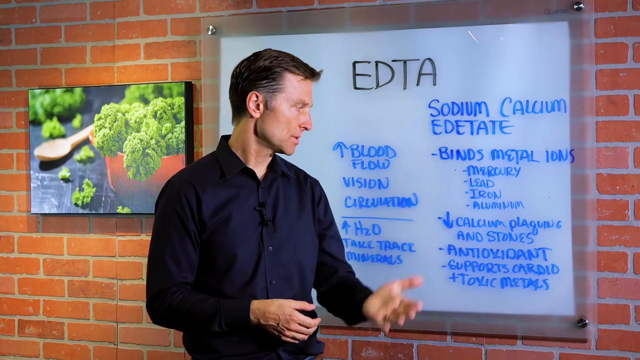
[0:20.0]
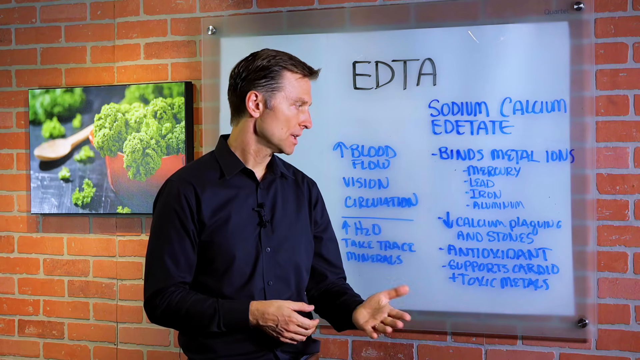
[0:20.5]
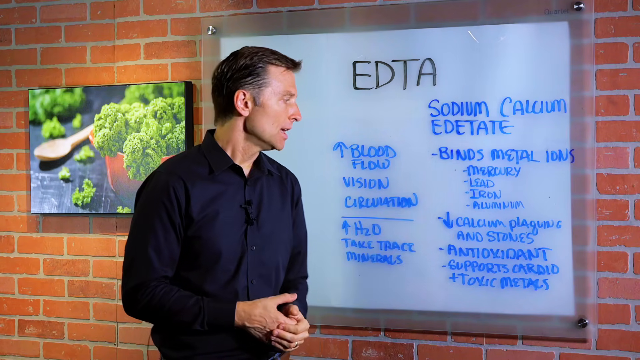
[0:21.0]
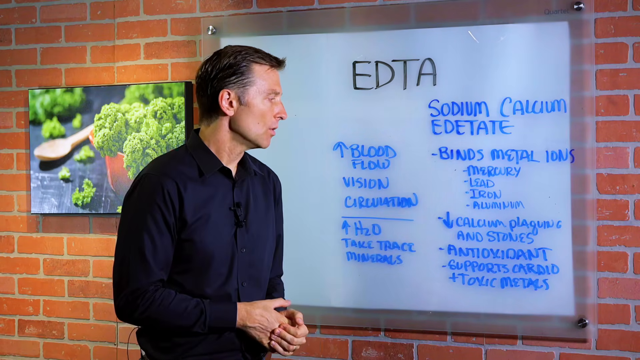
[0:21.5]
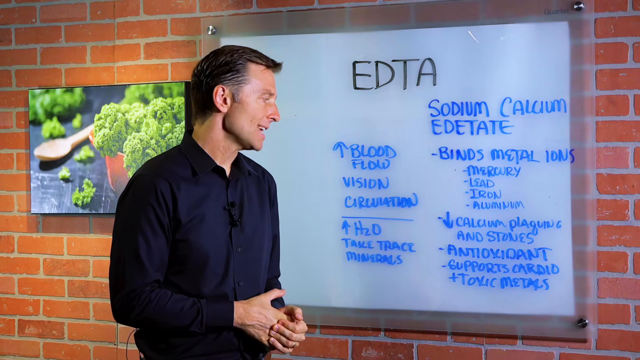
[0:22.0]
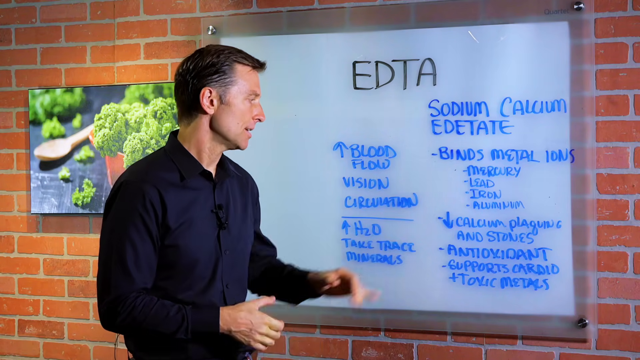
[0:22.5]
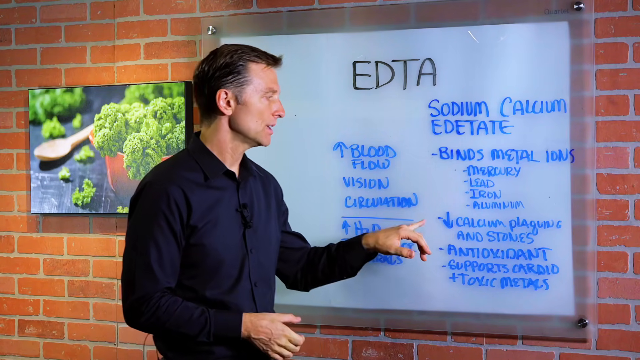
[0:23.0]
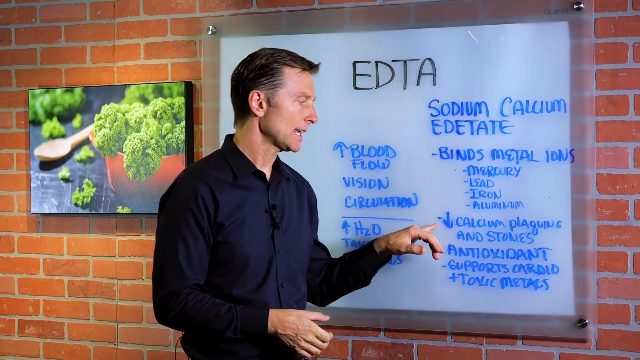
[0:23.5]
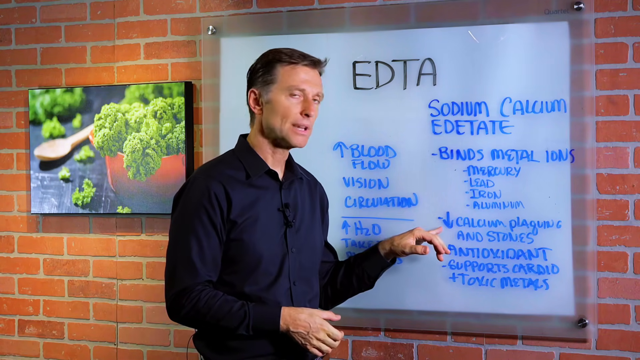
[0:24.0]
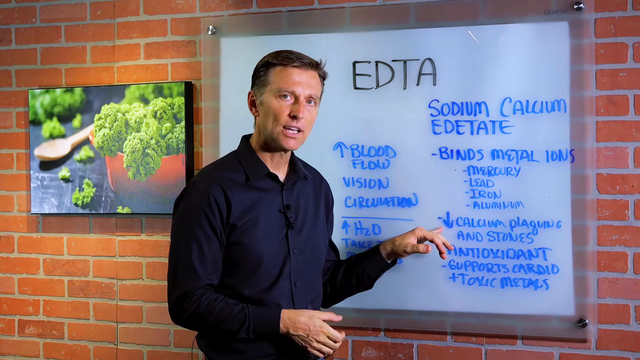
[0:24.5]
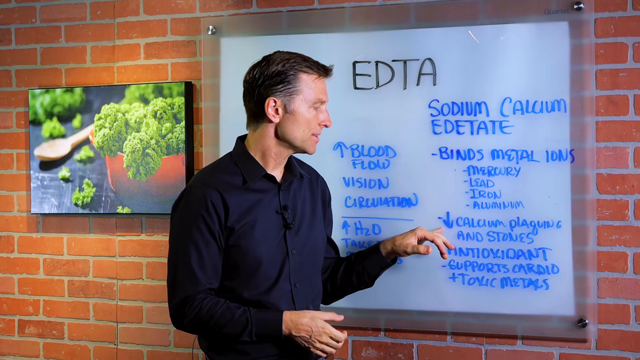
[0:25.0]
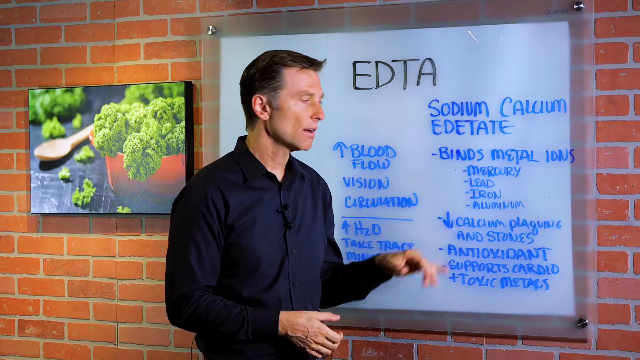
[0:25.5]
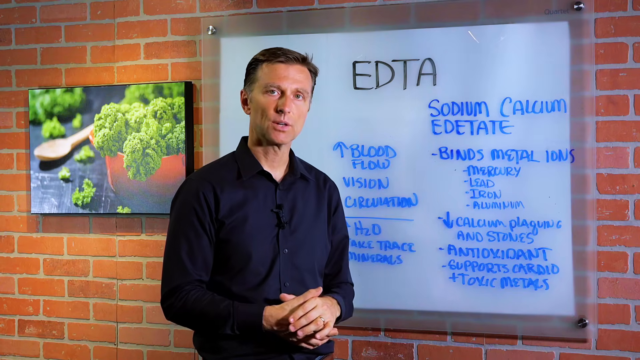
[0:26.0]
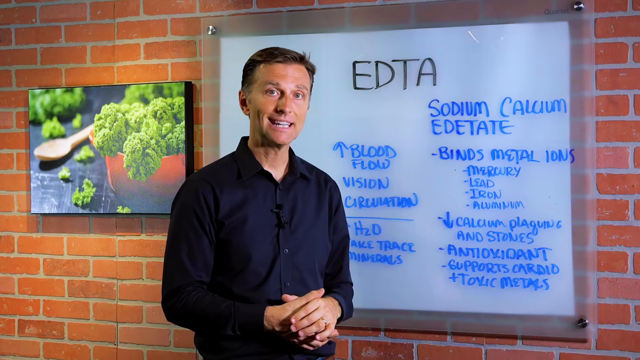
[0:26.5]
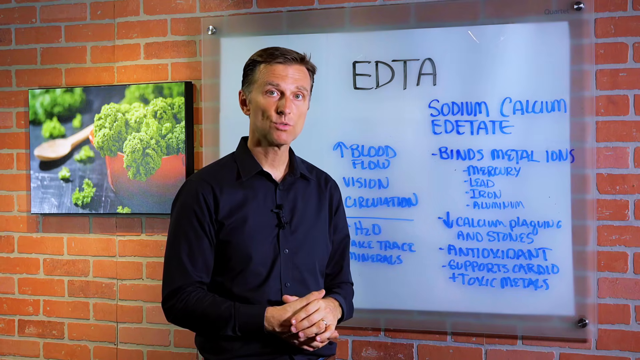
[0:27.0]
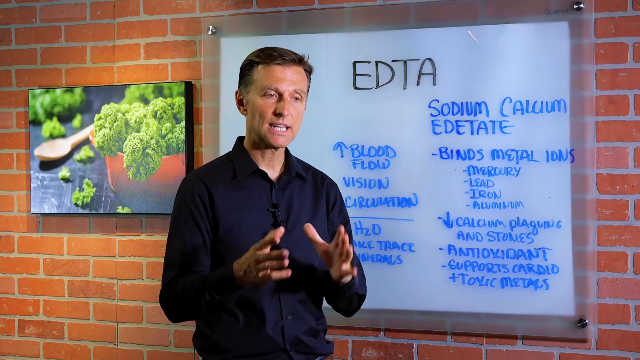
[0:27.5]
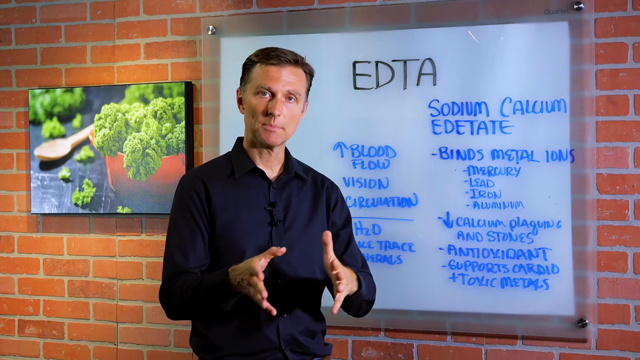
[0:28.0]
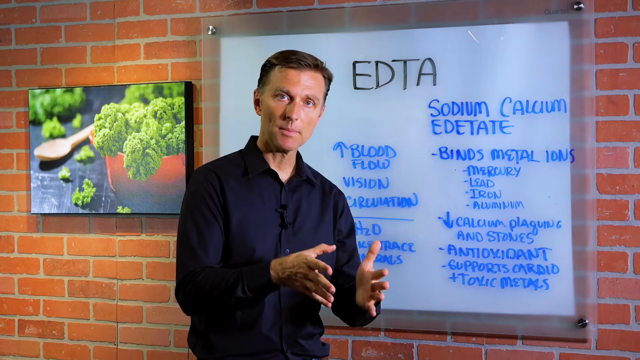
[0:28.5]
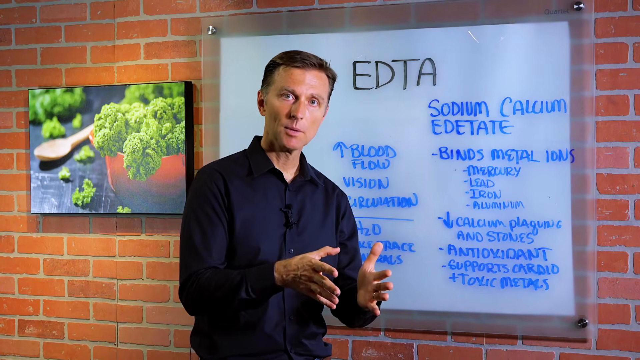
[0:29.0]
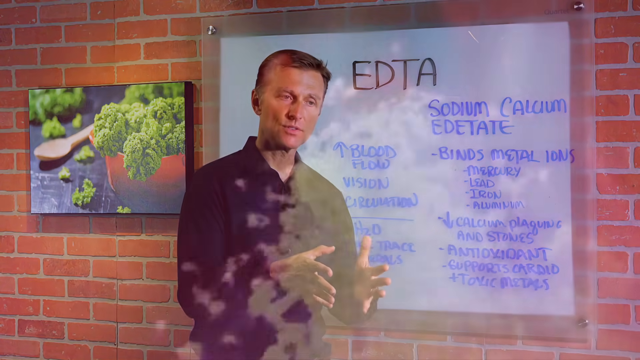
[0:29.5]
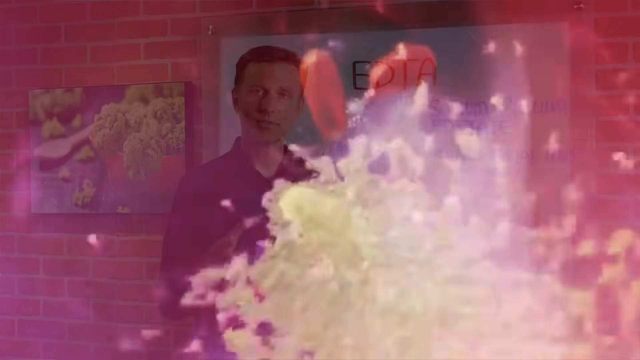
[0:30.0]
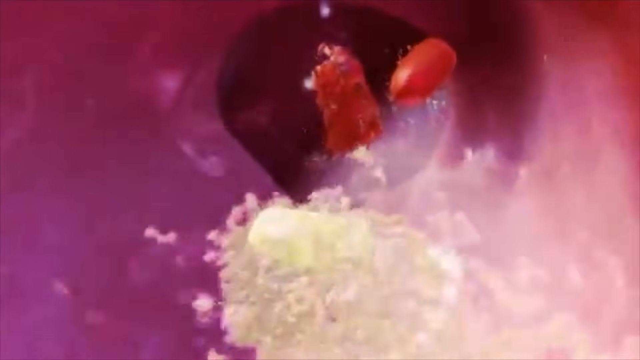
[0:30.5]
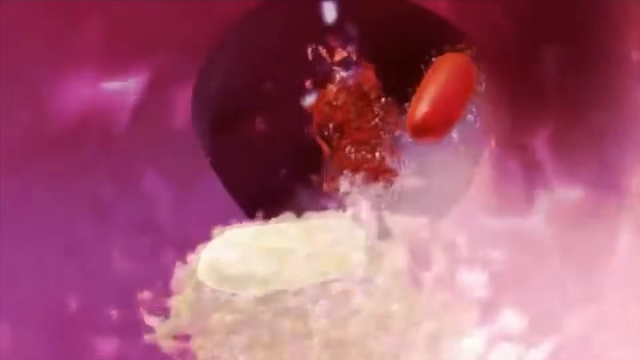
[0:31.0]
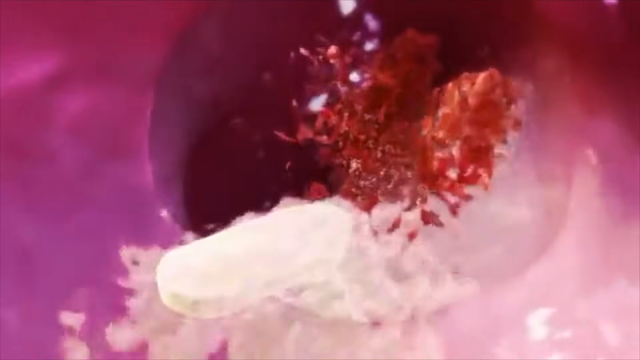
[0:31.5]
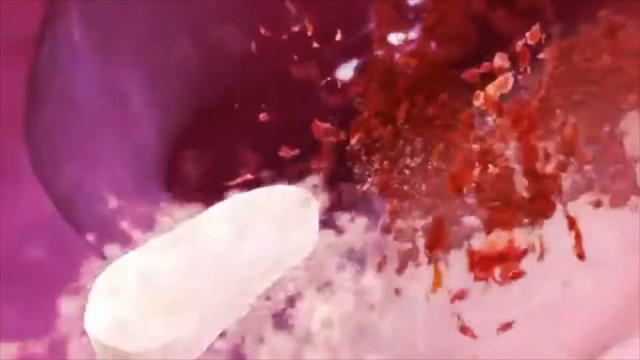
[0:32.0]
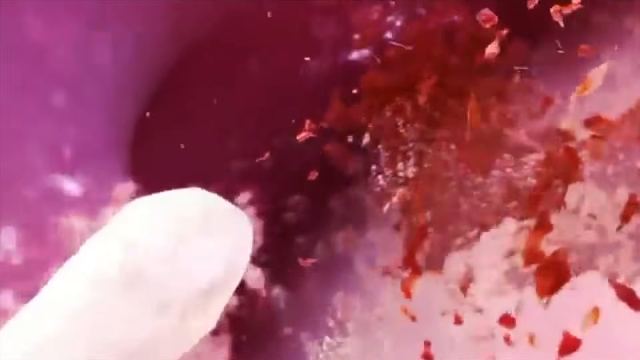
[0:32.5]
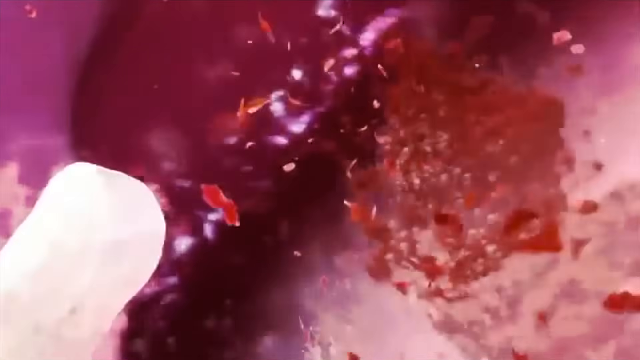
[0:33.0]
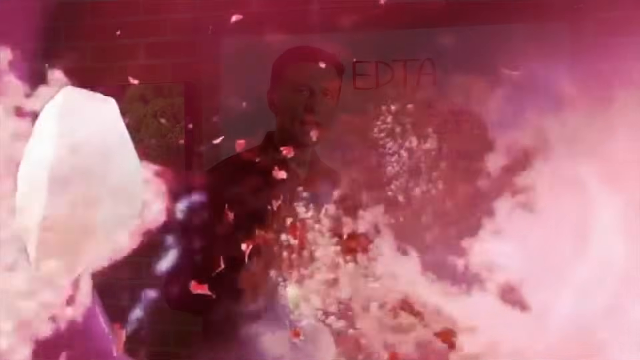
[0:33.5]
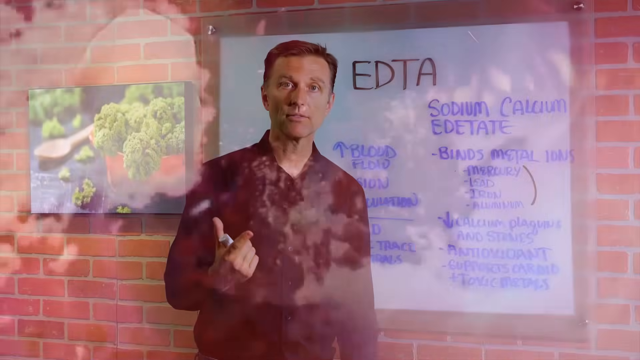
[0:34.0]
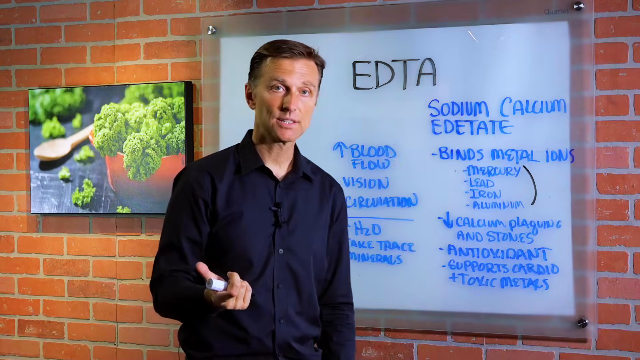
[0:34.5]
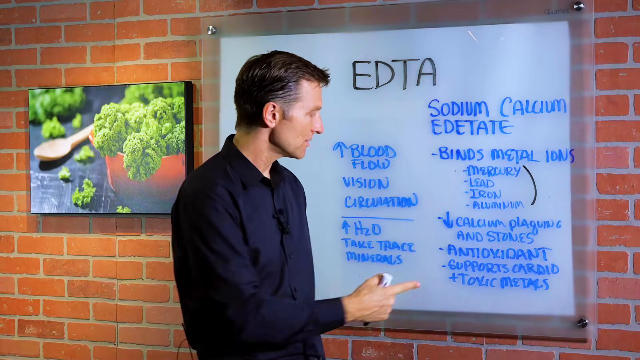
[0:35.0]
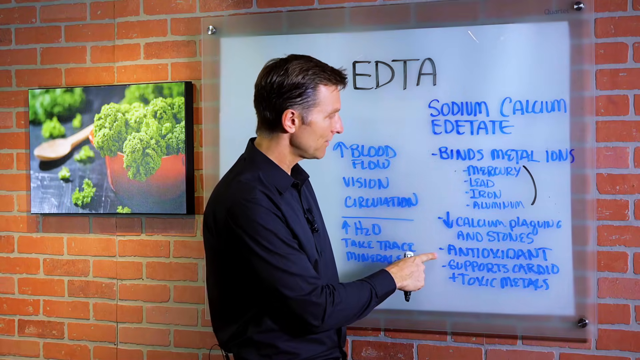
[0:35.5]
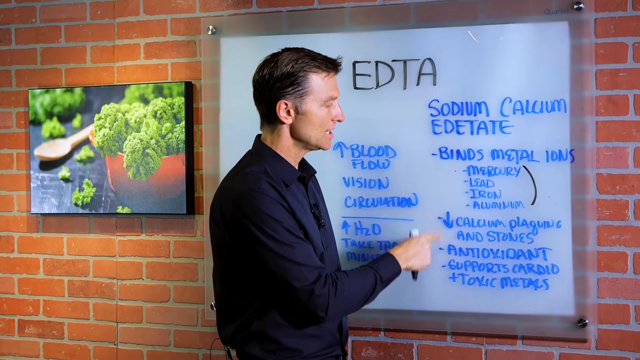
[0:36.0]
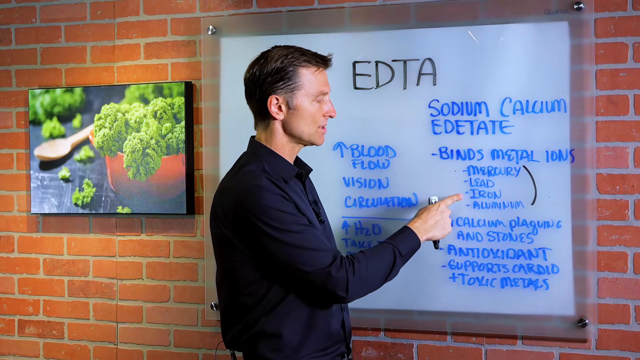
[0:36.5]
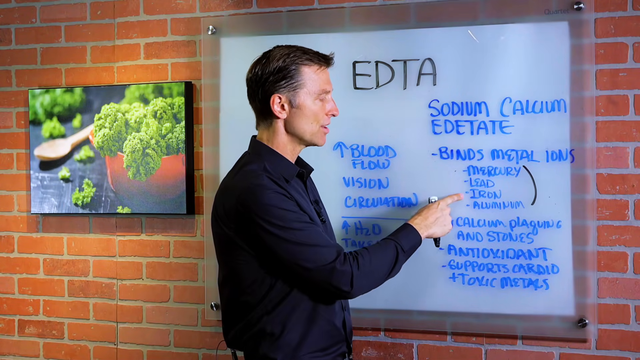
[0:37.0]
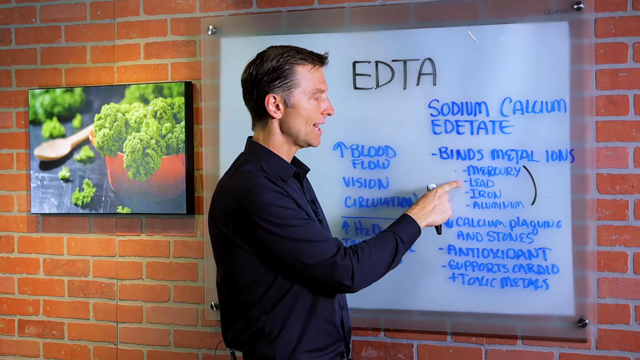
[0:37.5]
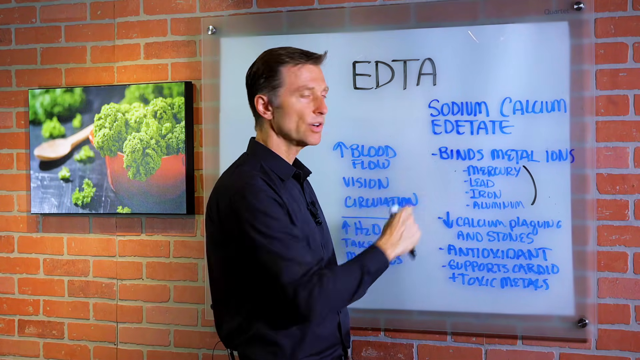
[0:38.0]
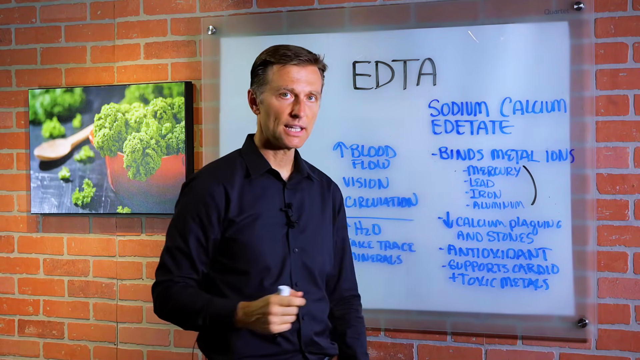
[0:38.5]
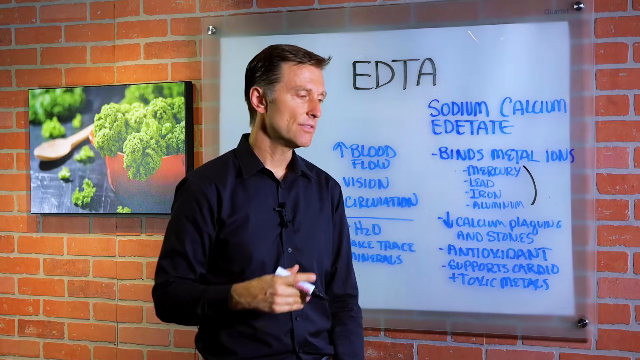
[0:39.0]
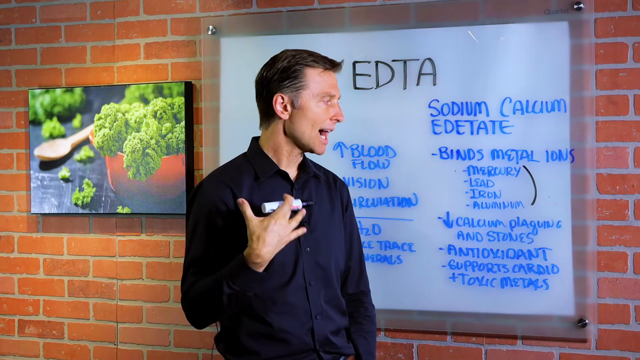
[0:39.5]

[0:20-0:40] The white man with a blue shirt and brown hair looks at the middle section of the whiteboard behind him. With his left pinky he points at the words "calcium, flake and stones", then looks into the camera and talks. He looks back toward the whiteboard, removes his left pinky from the board, and opens both hands in a palm motion from right to left. The scene changes to the inside of someone's arteries, where a red blood cell and a white blood cell are visible; the red blood cell collapses, as does the white one. The scene returns to the man, who holds a white object in his right hand. Using his index finger, he turns to the board and points at "antioxidants", "aluminum", "iron", "lead" and "mercury". He faces the camera again and turns the marker around in his right hand.